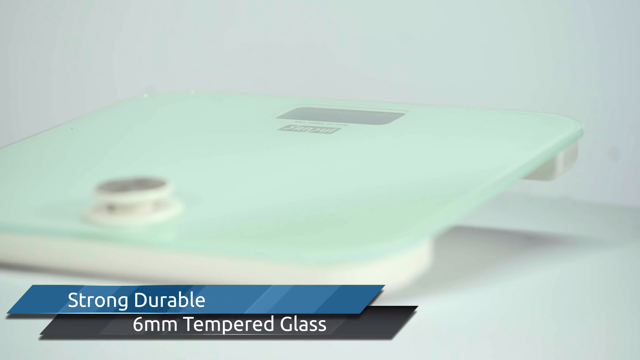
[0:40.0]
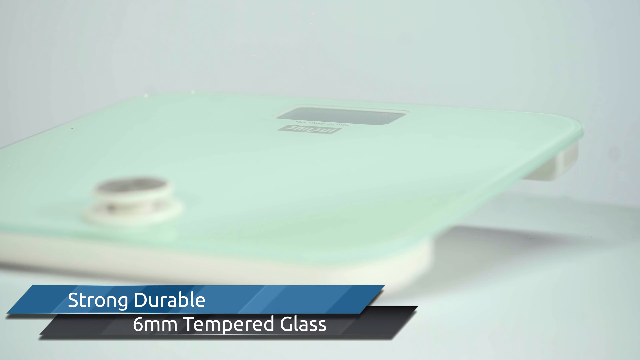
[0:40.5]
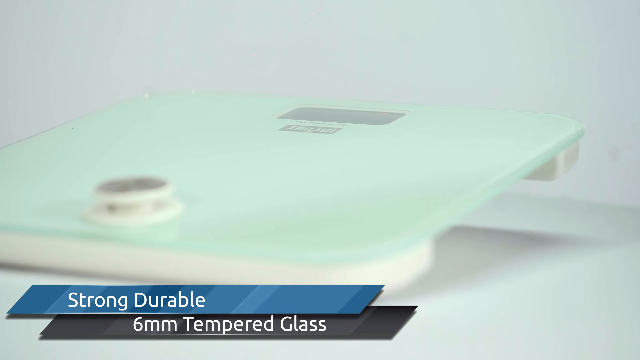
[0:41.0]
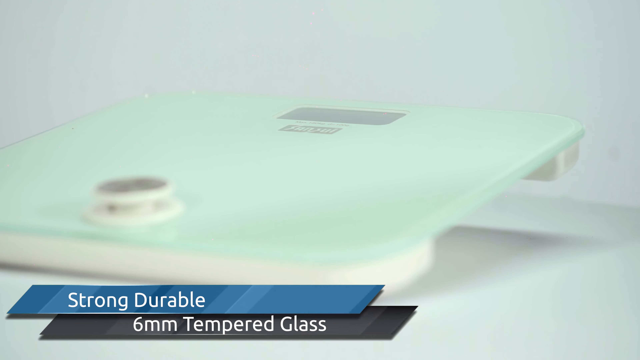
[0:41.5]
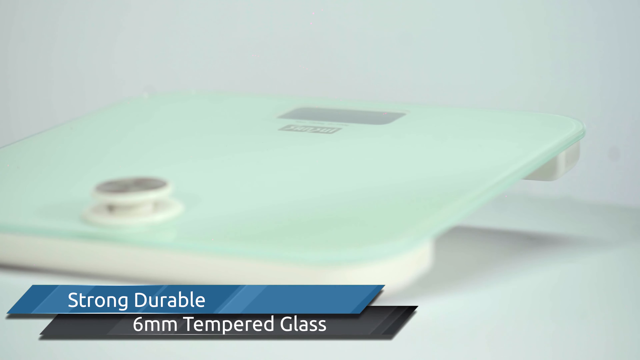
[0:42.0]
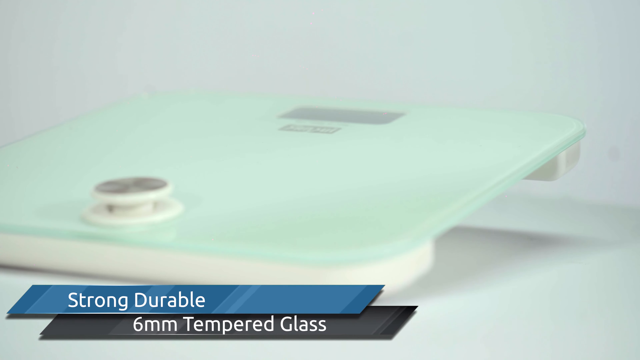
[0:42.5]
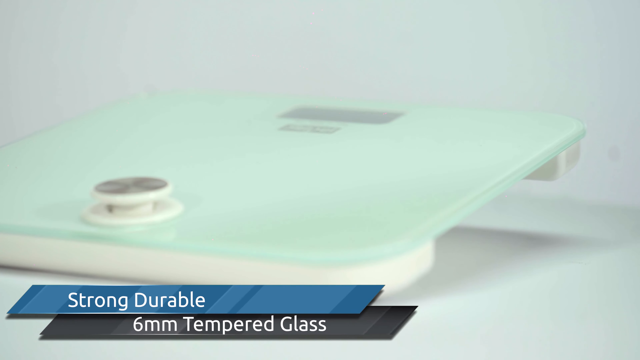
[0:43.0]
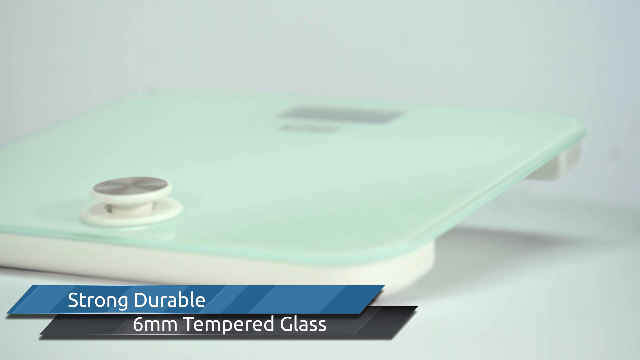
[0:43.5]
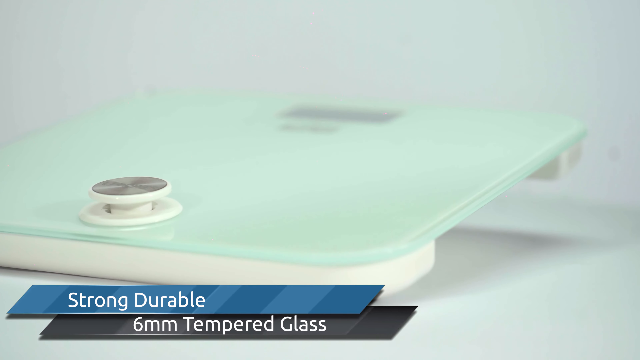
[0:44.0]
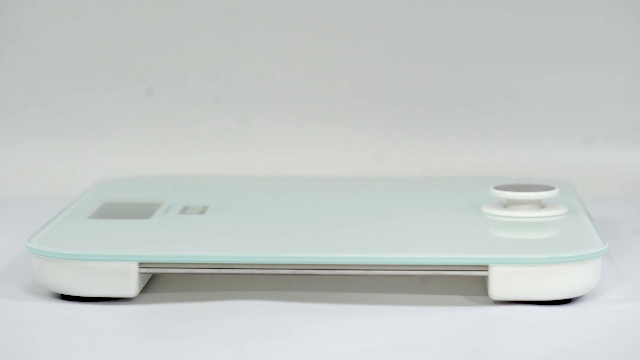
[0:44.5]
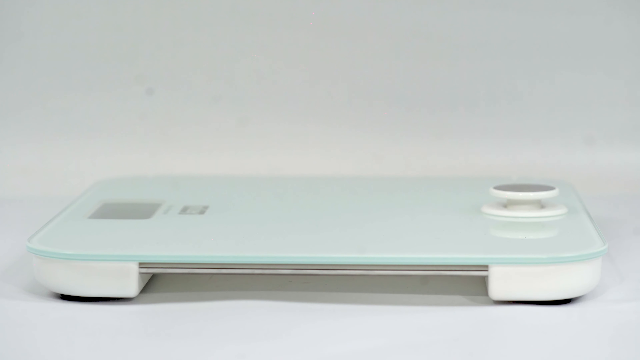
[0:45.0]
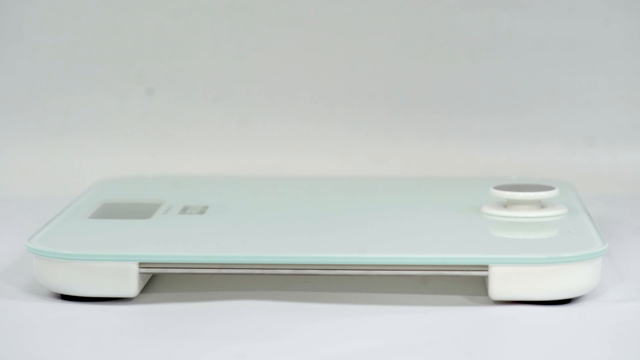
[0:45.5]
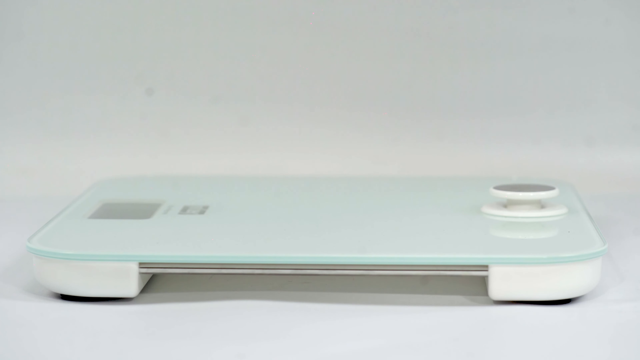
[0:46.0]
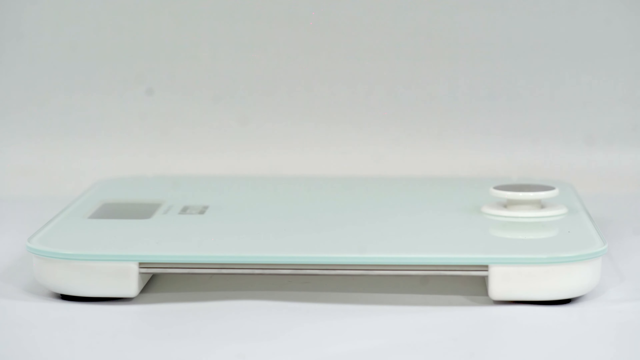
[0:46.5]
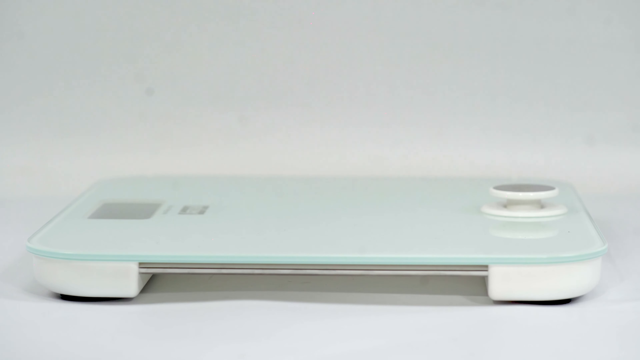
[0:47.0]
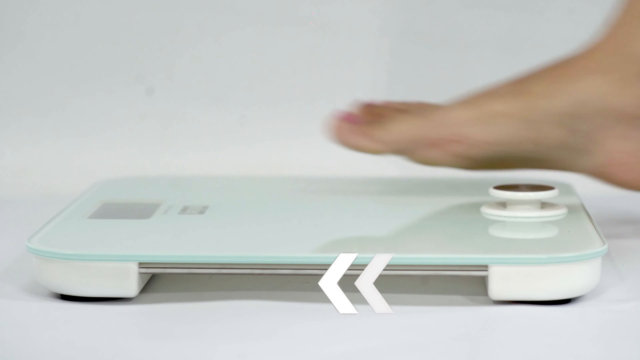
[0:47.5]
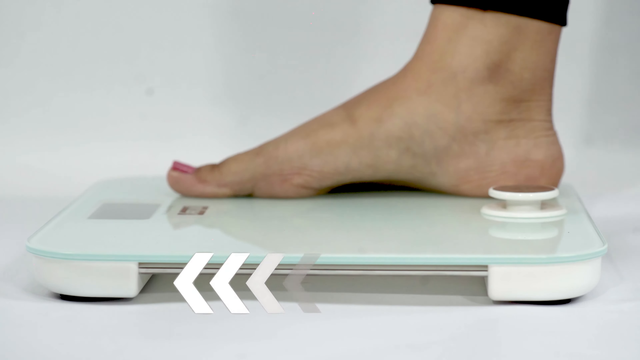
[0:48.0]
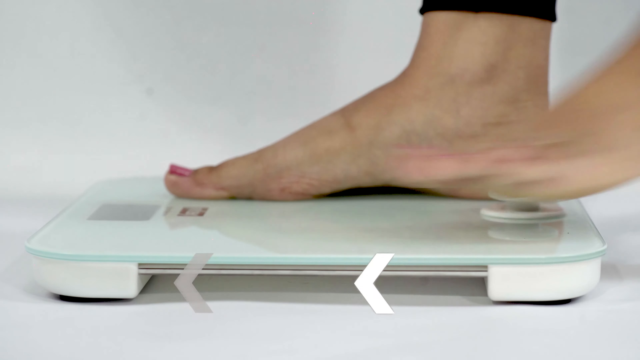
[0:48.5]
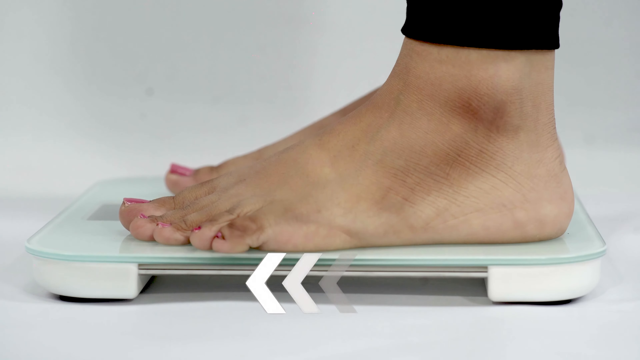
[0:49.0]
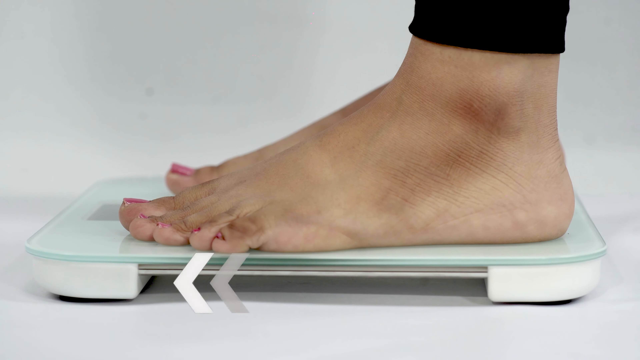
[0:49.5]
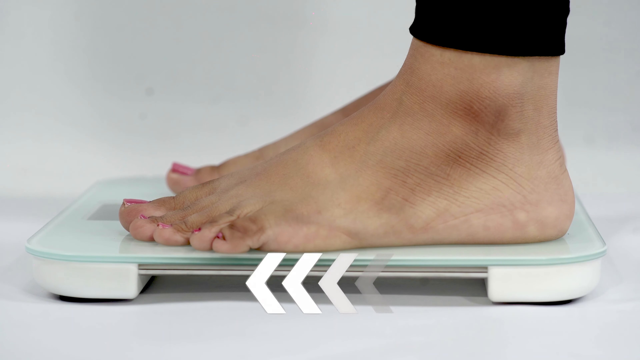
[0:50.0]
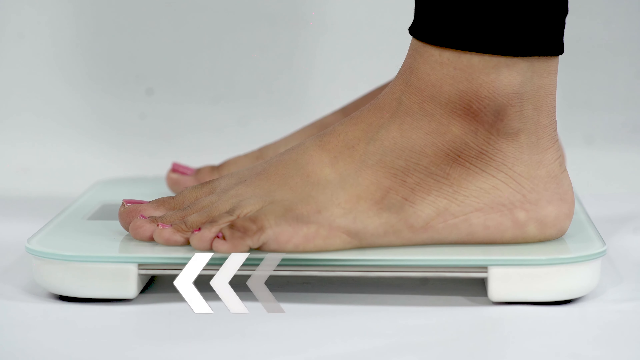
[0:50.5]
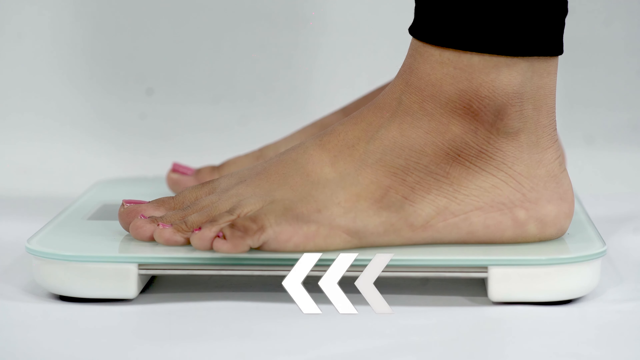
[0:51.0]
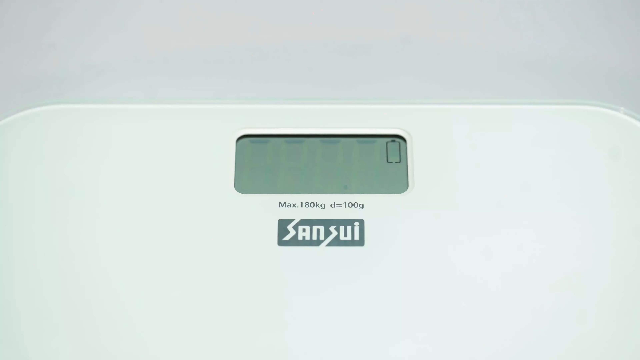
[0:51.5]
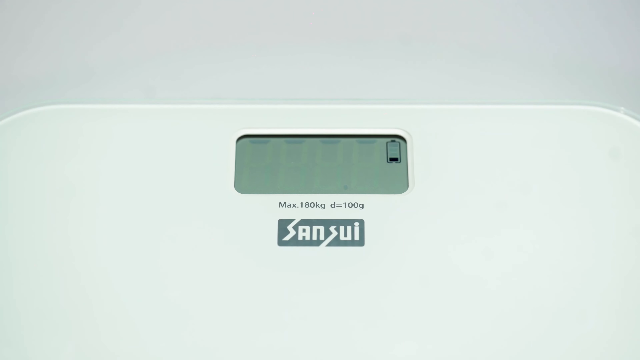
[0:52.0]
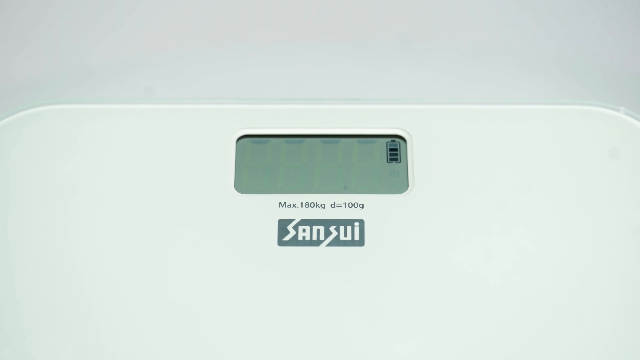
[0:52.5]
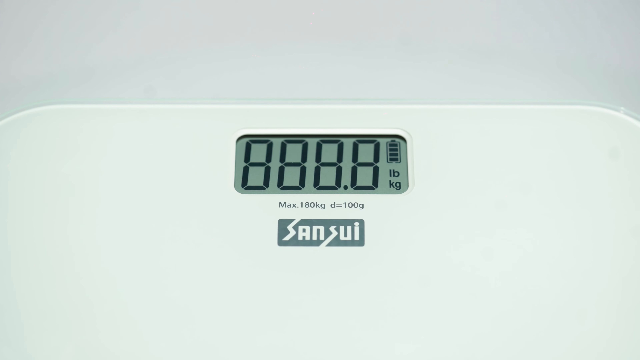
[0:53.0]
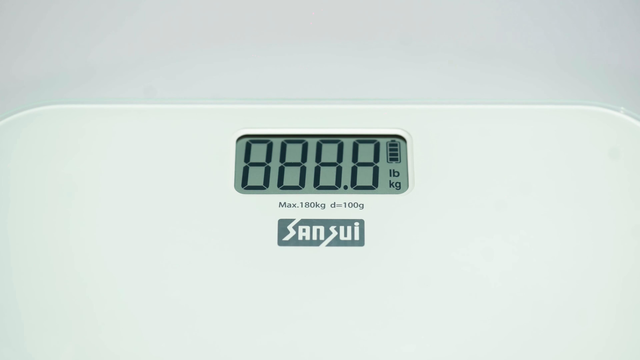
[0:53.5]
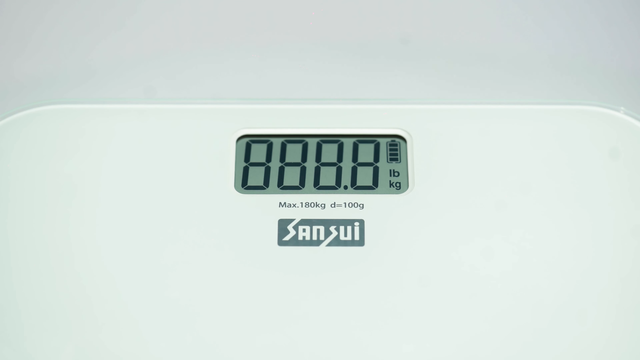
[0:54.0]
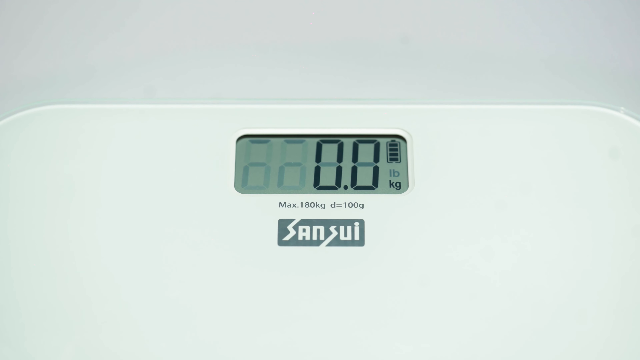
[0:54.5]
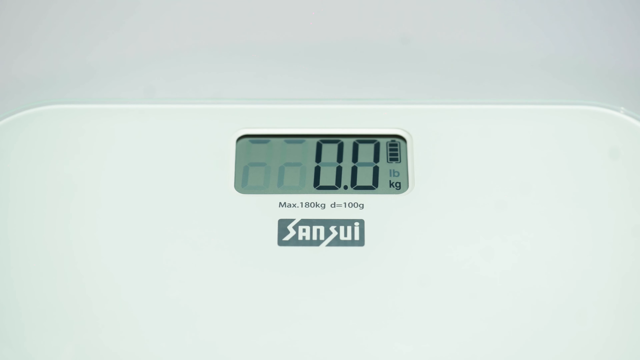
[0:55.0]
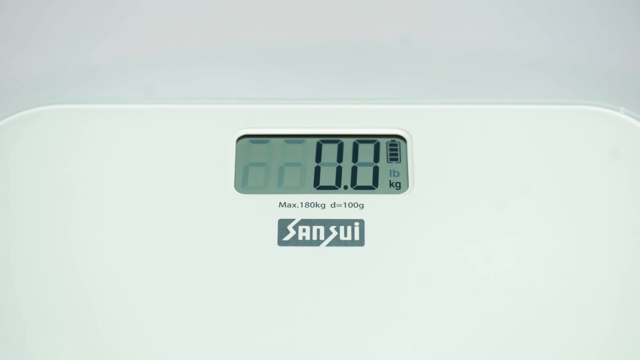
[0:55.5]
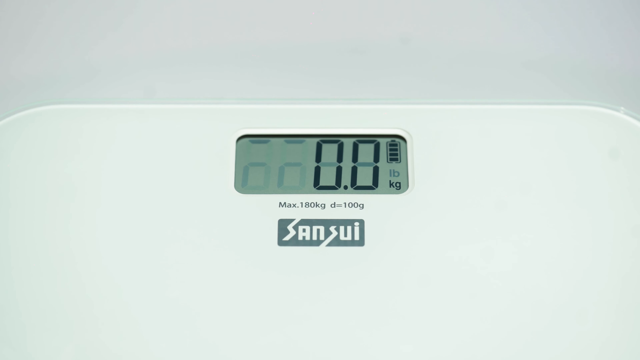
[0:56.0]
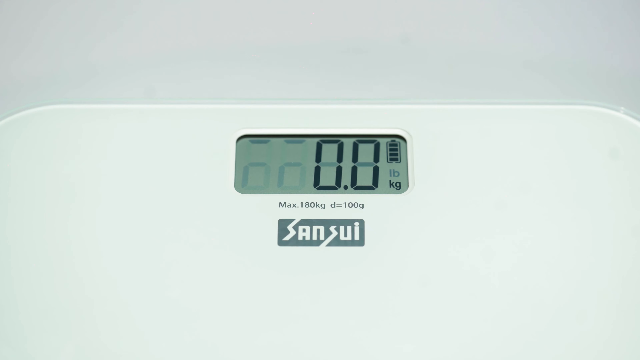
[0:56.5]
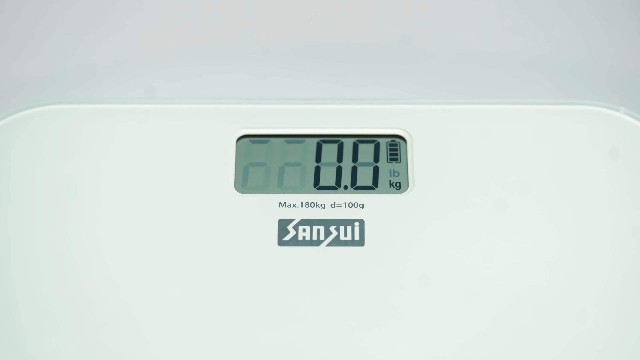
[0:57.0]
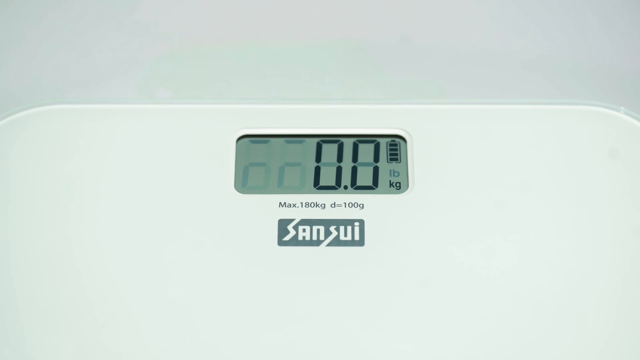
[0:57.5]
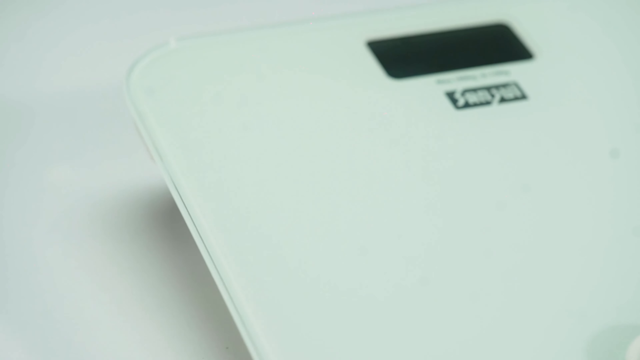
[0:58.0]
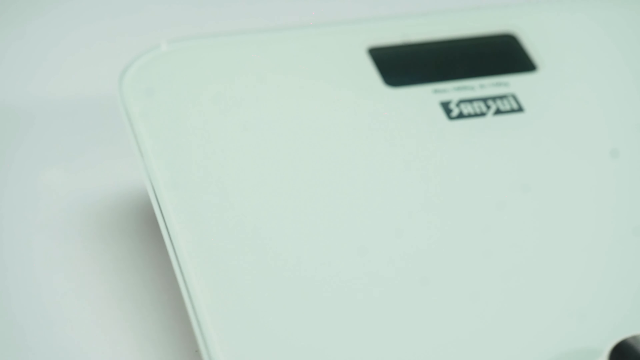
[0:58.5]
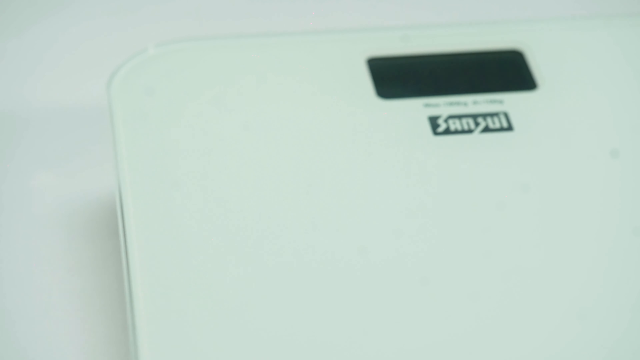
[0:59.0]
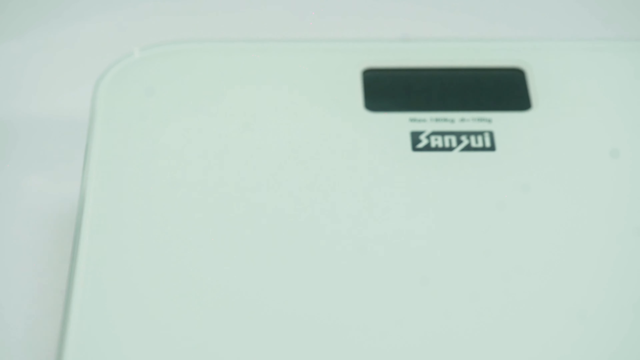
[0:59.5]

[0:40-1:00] Scales that appear to have a glass covering are shown, with a woman standing on them. The digital display shows 00. The video then moves to a side view of the scales, where the glass almost looks minty green from this angle. A woman who appears to be wearing black leggings stands on the scales, which have the logo "Sansui" written on them. The scales are then seen from different angles: from the side, from the front, and from the top, with a picture of the digital display. This continues in a loop, with the scales shown from different angles and the woman standing on them repeatedly. The shot is very close up, so when the woman stands on the scales only her feet and the very bottom of her leggings are visible.